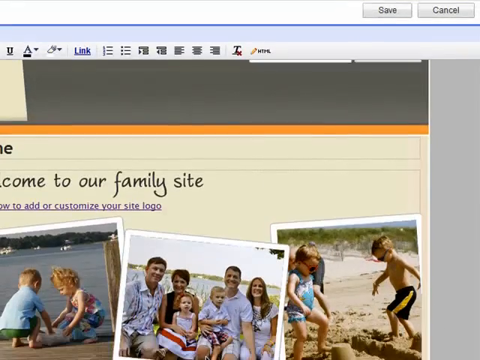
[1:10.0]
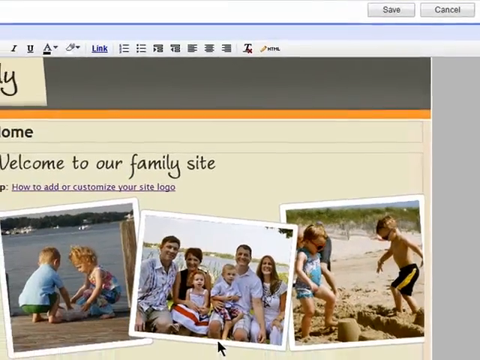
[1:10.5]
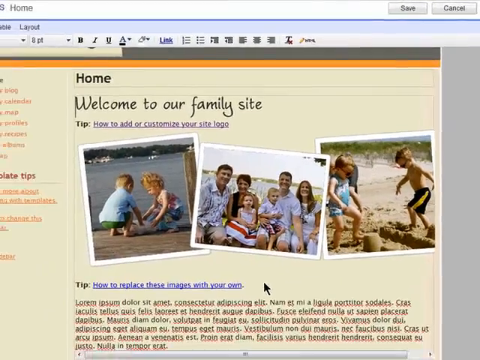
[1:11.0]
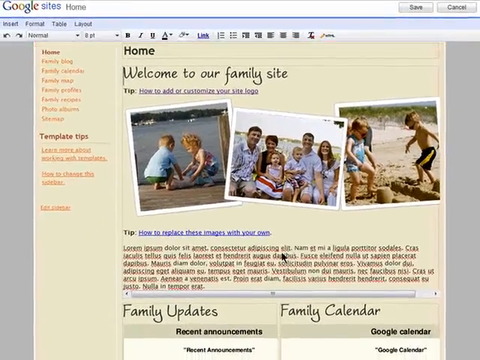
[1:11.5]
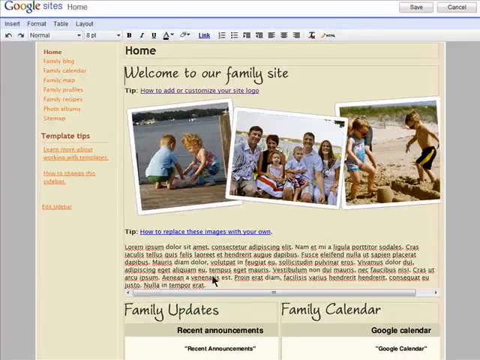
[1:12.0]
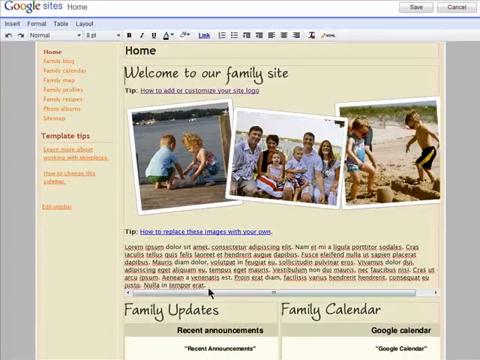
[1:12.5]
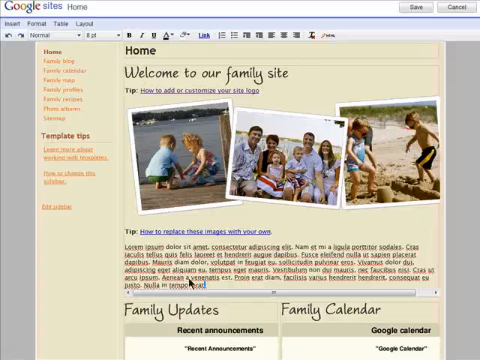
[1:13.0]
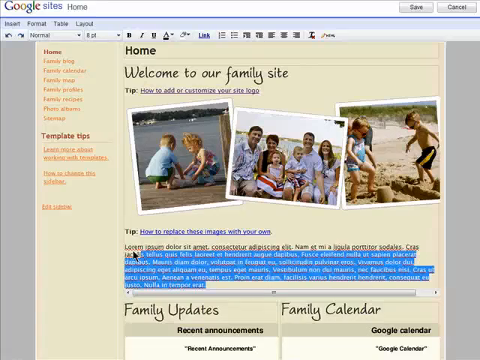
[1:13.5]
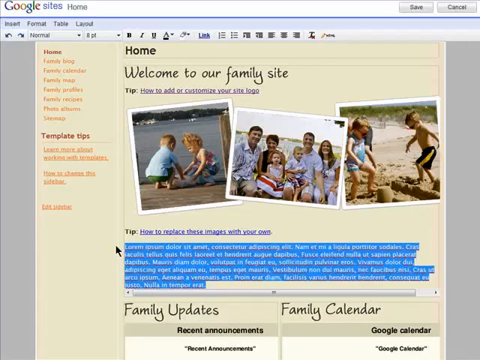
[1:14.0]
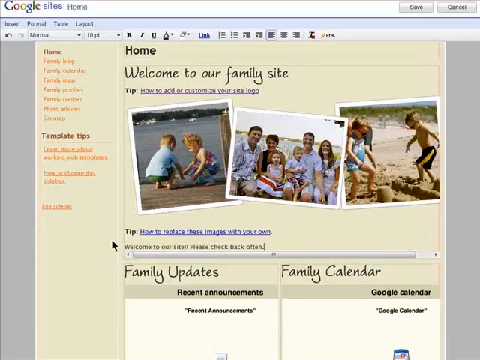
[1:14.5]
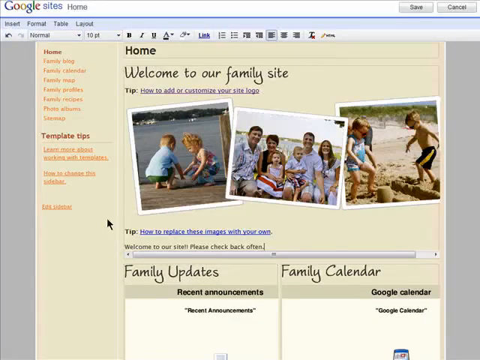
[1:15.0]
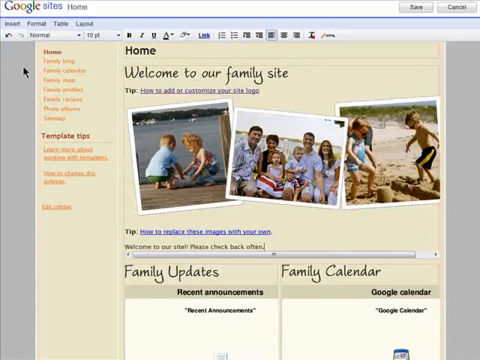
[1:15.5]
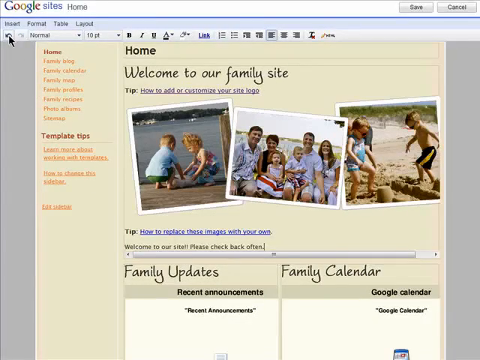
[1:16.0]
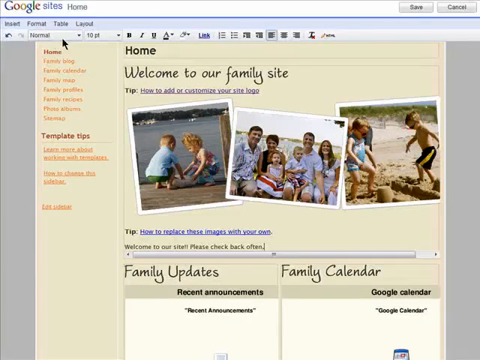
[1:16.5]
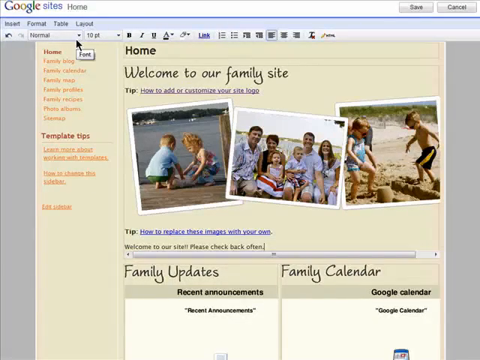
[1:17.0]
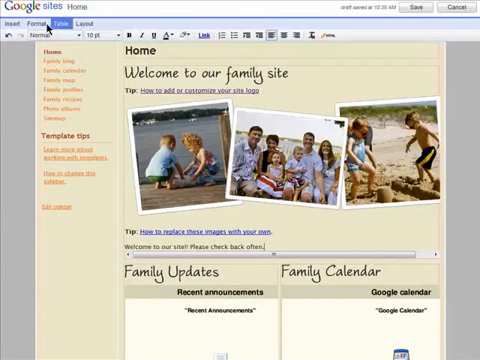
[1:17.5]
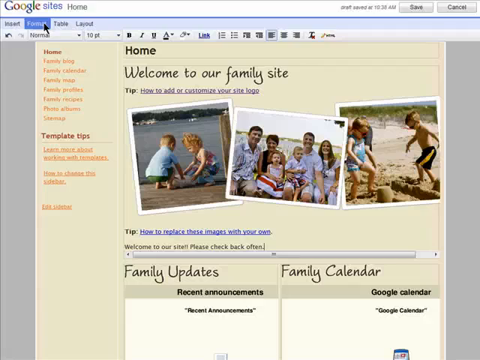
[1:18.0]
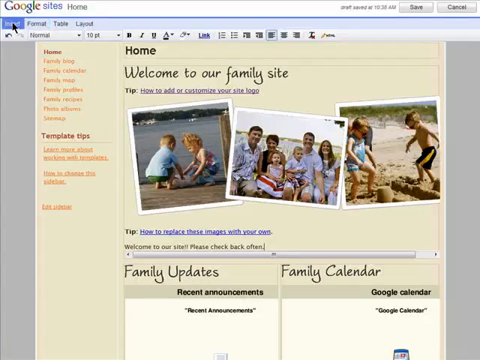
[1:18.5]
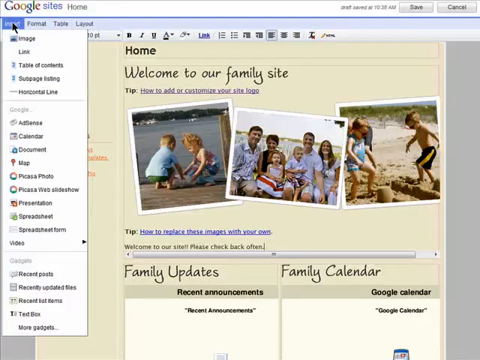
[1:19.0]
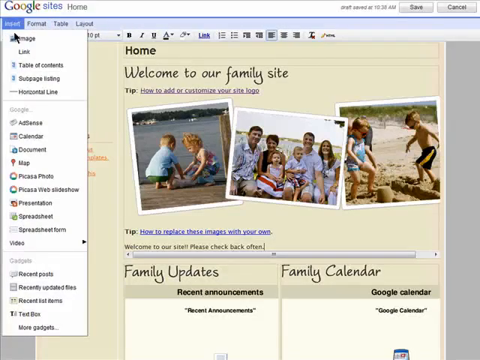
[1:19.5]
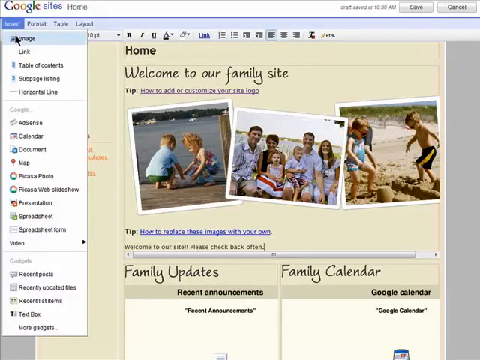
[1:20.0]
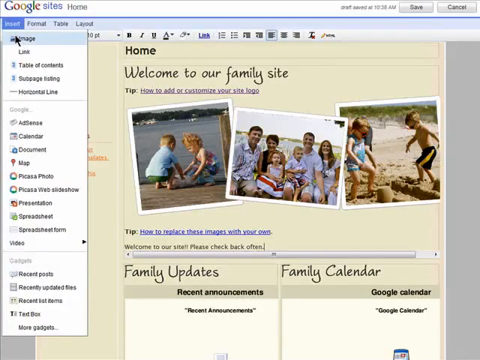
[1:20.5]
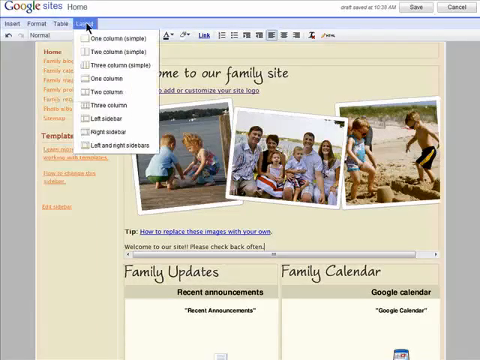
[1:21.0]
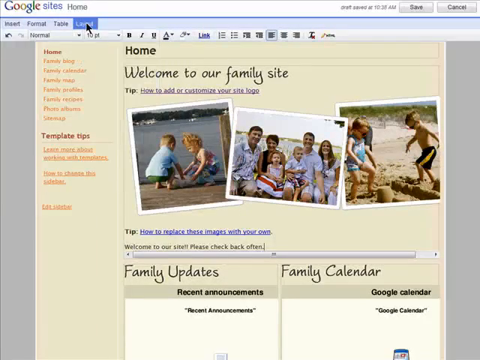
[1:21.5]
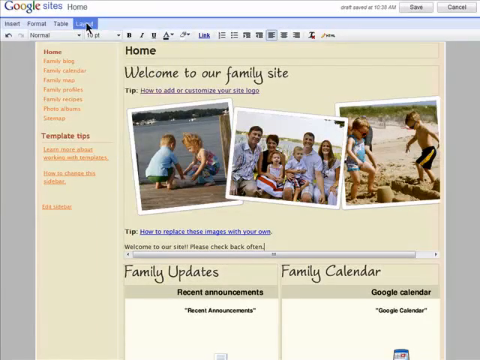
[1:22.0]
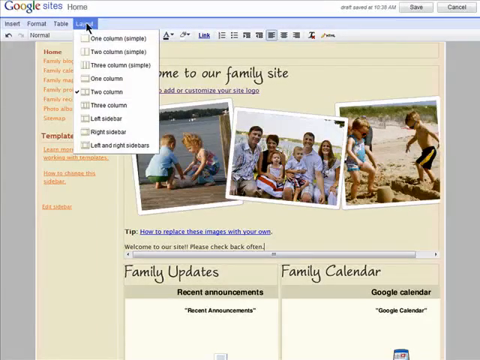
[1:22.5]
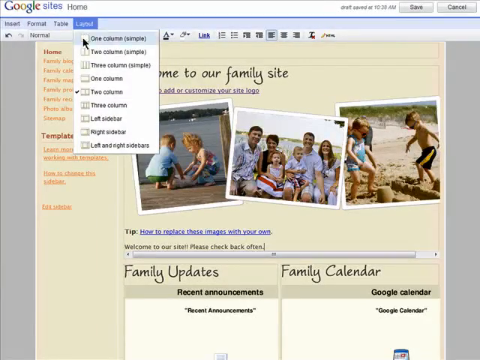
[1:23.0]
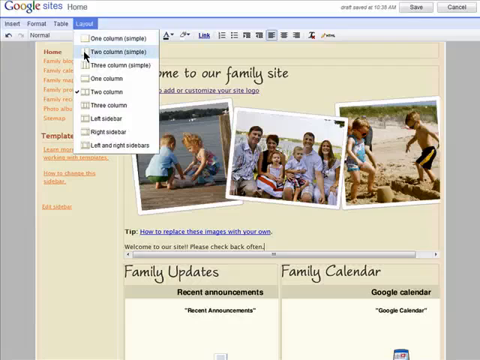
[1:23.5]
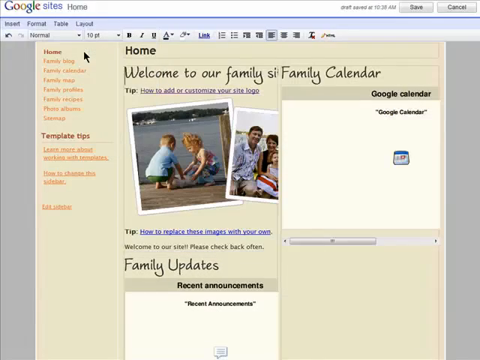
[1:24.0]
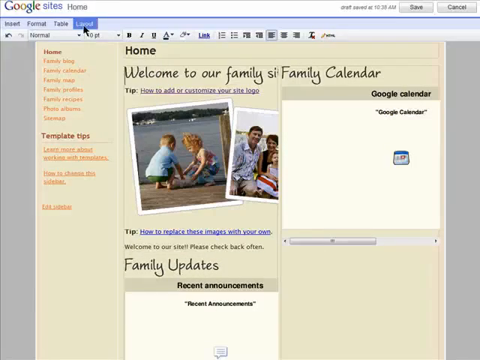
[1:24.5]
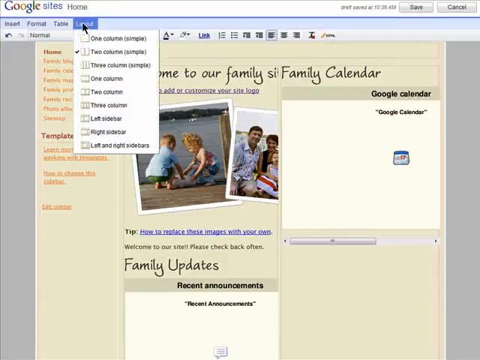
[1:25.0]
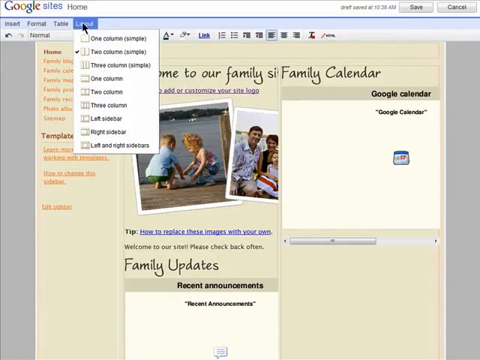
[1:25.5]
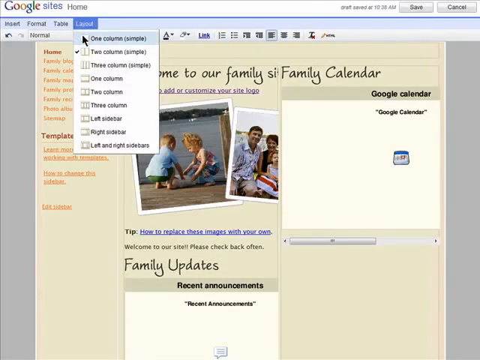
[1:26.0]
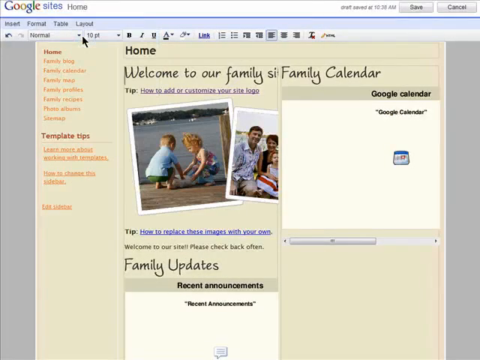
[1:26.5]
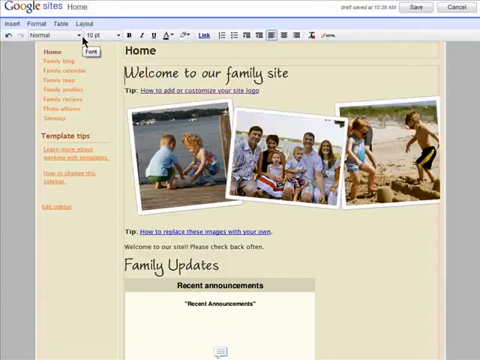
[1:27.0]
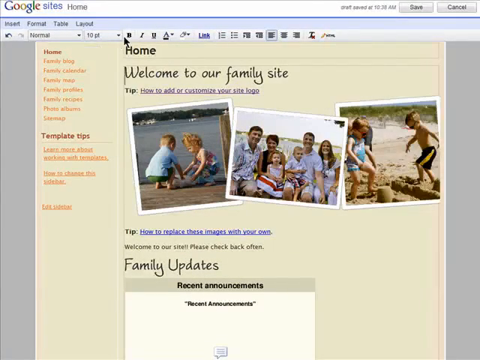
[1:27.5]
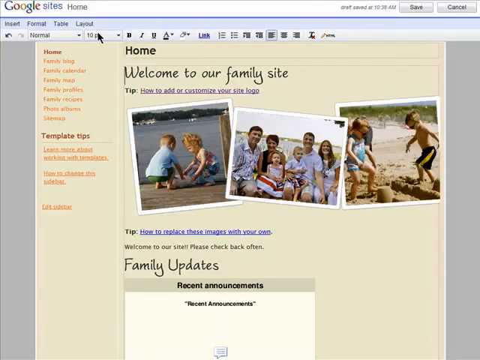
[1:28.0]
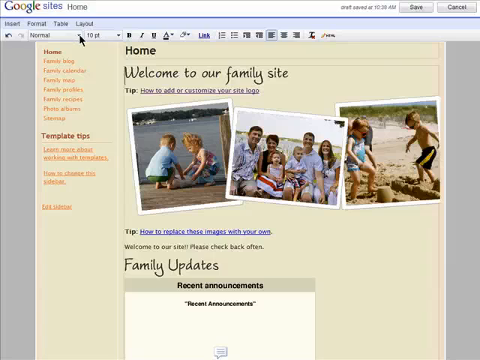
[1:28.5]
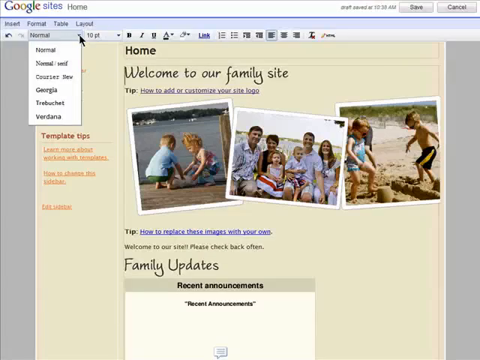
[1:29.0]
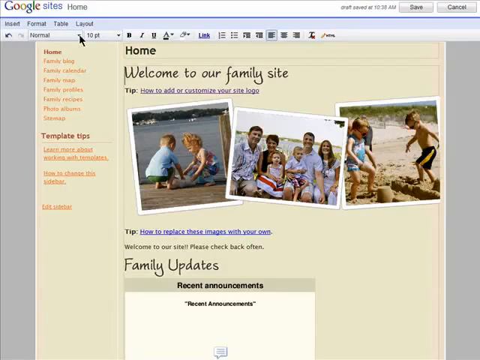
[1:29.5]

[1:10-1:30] The family's website page is shown, apparently where they store important information. Under the tip section reading "how to replace these images with your own," the whole paragraph is highlighted and then seems to be removed, probably with a cut feature, as the paragraph disappears. The cursor moves to the upper left-hand corner to what seems to be insert, and a window opens, apparently to insert an image. Seemingly focused on the layout first, the user opens the layout, closes it, and then goes over to what seems to be the font, apparently modifying the homepage.